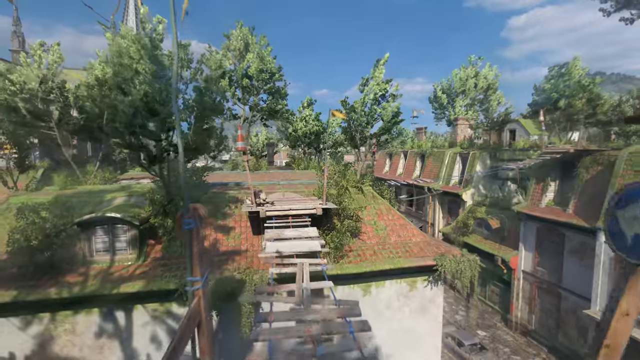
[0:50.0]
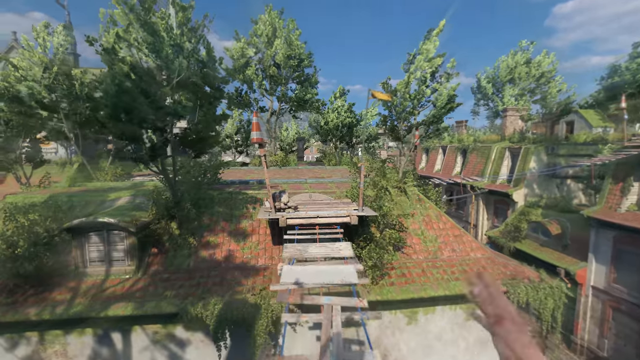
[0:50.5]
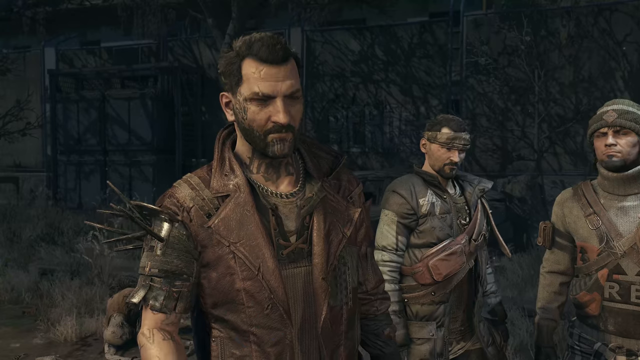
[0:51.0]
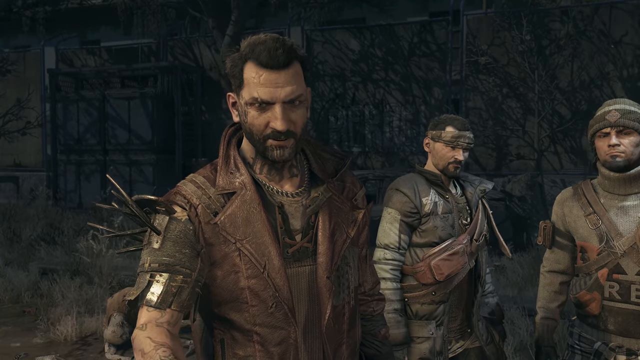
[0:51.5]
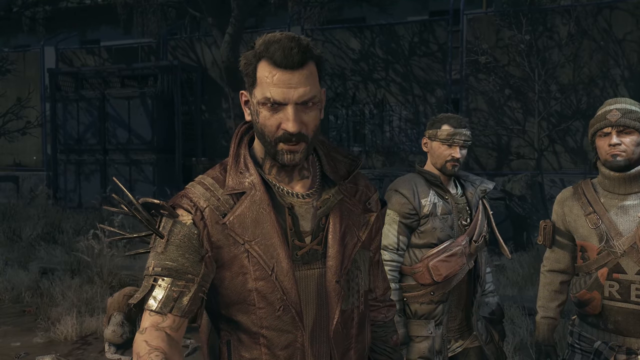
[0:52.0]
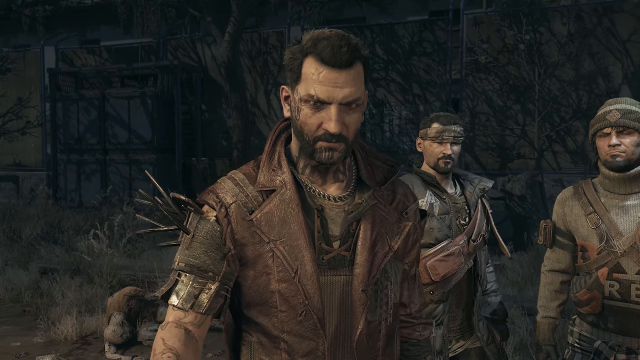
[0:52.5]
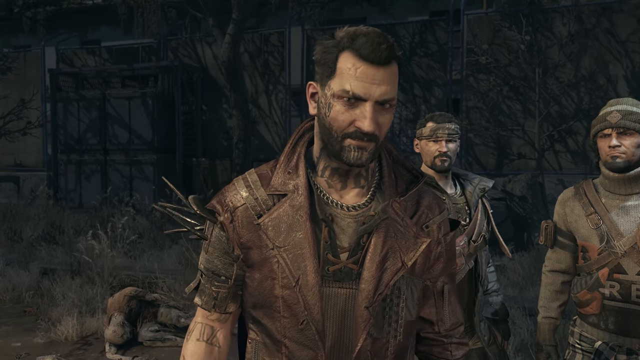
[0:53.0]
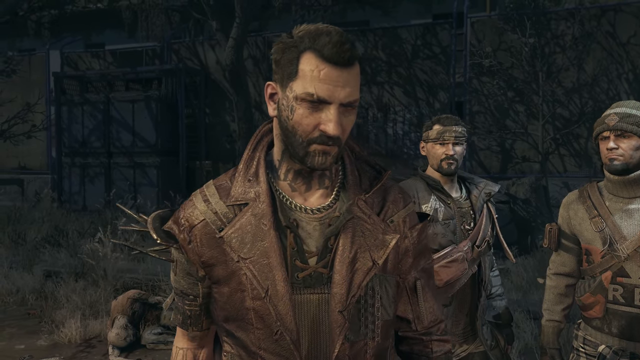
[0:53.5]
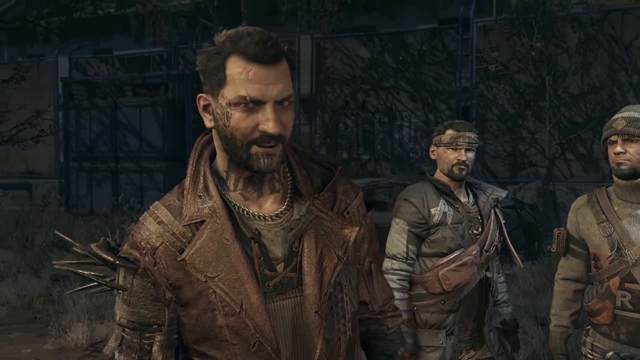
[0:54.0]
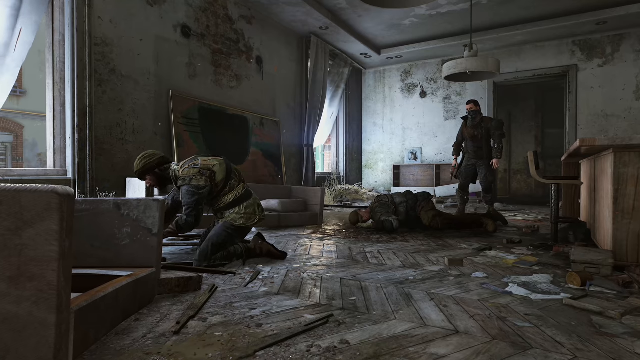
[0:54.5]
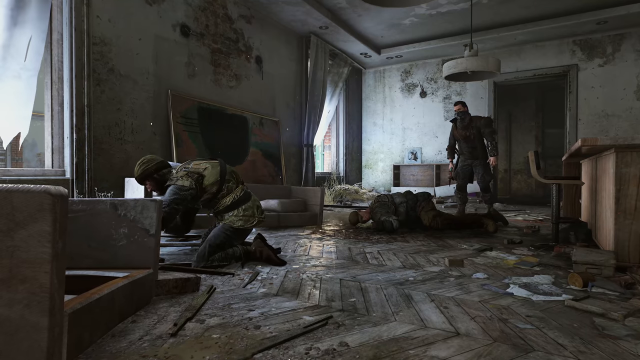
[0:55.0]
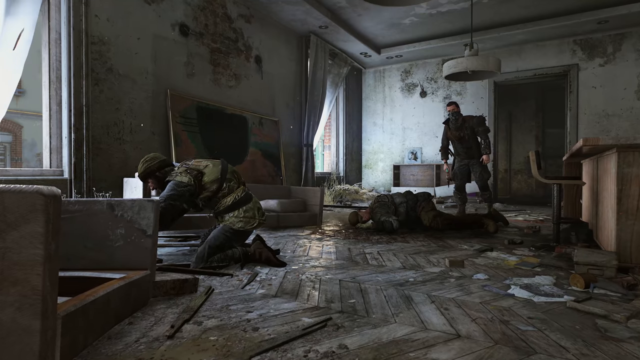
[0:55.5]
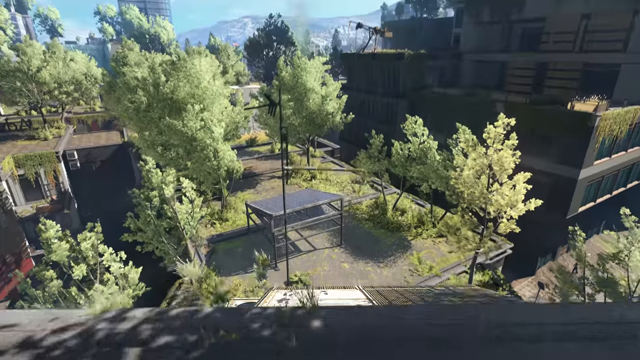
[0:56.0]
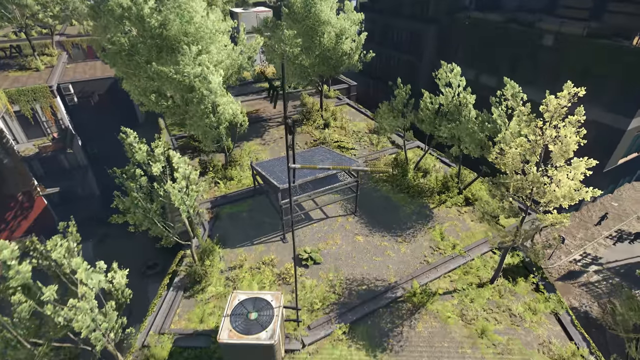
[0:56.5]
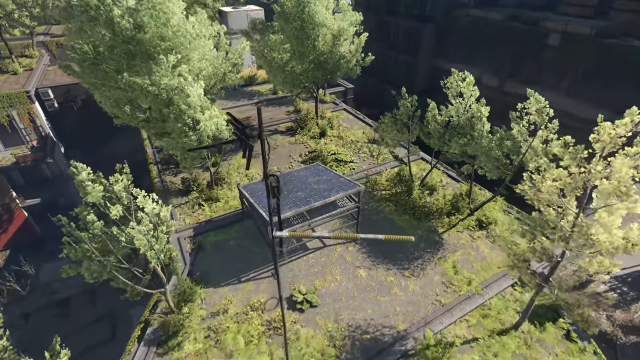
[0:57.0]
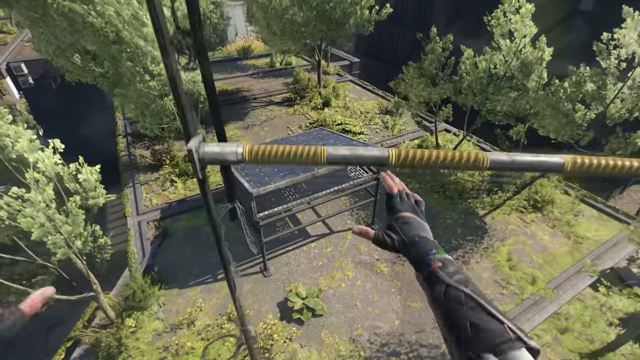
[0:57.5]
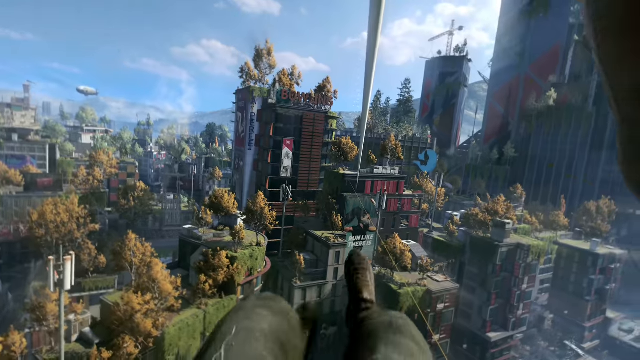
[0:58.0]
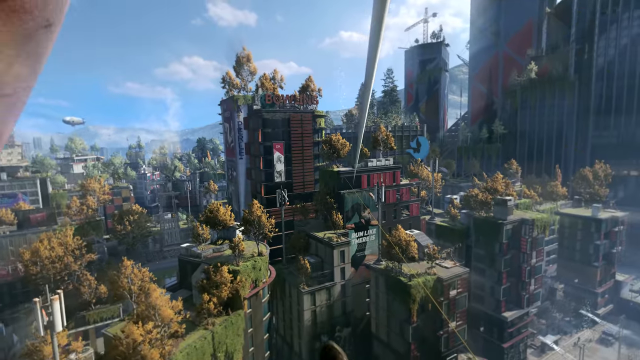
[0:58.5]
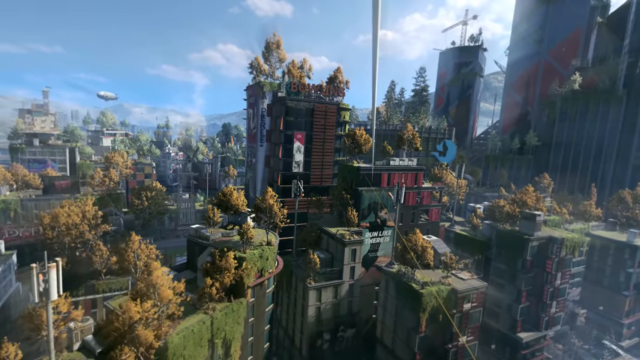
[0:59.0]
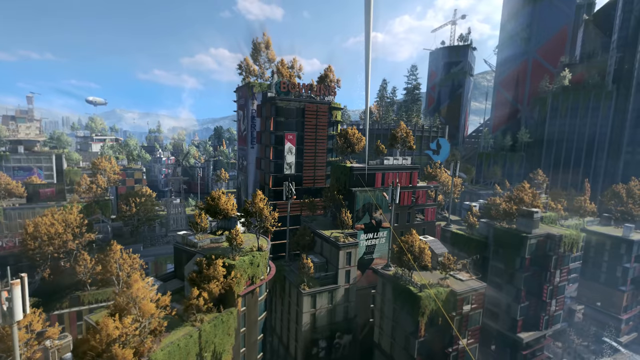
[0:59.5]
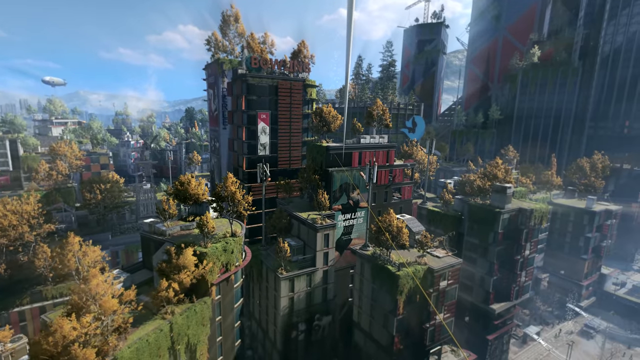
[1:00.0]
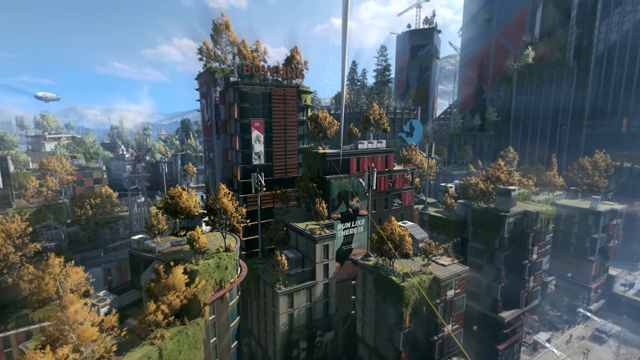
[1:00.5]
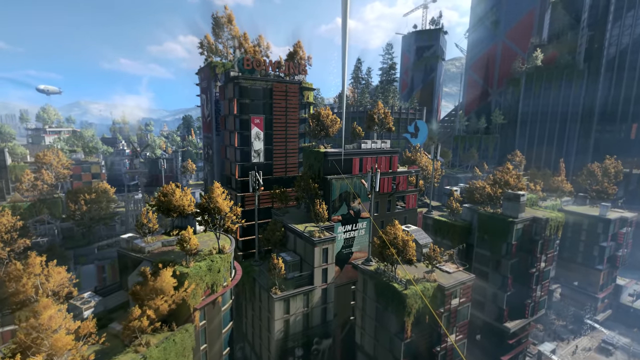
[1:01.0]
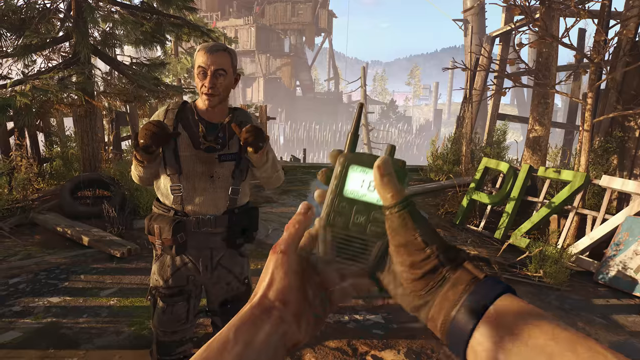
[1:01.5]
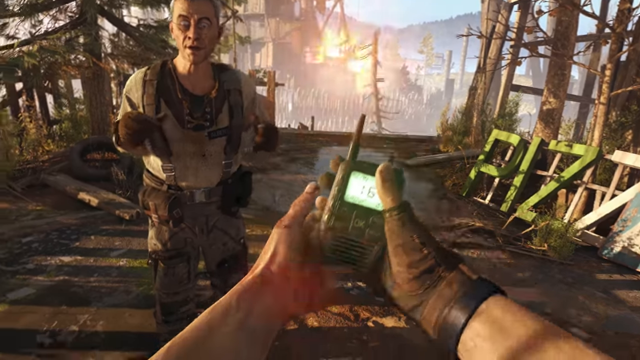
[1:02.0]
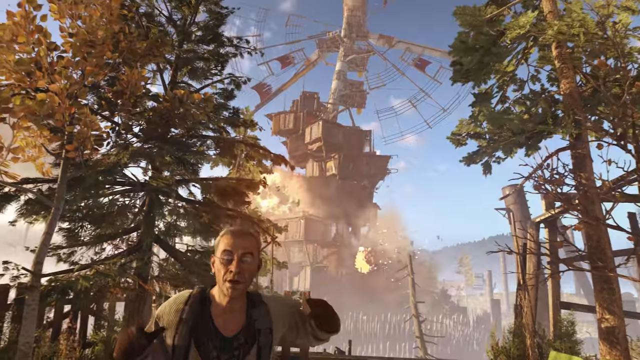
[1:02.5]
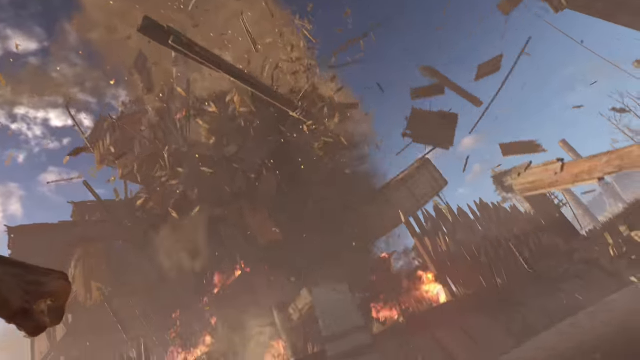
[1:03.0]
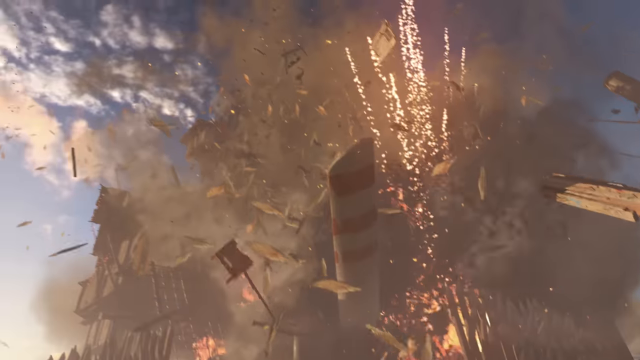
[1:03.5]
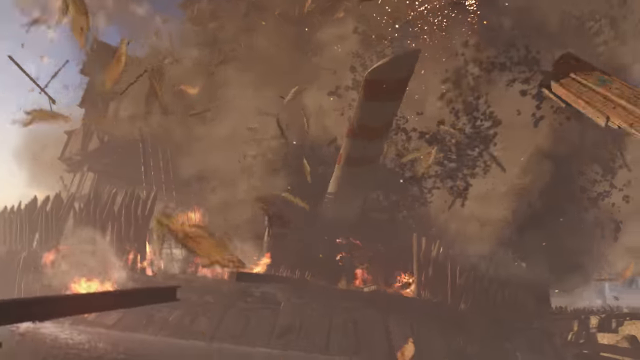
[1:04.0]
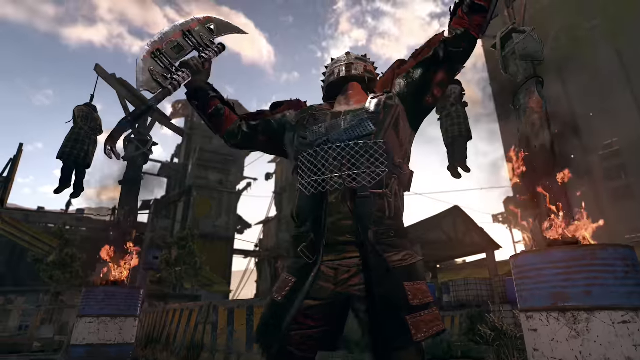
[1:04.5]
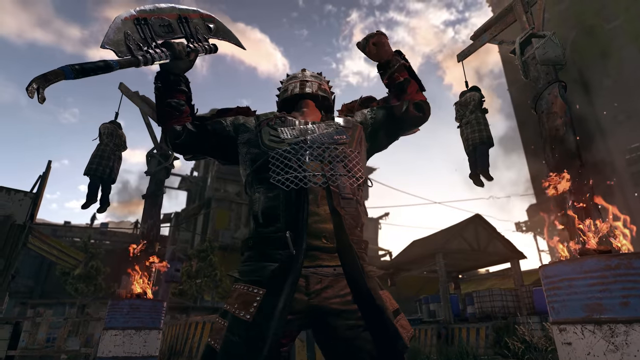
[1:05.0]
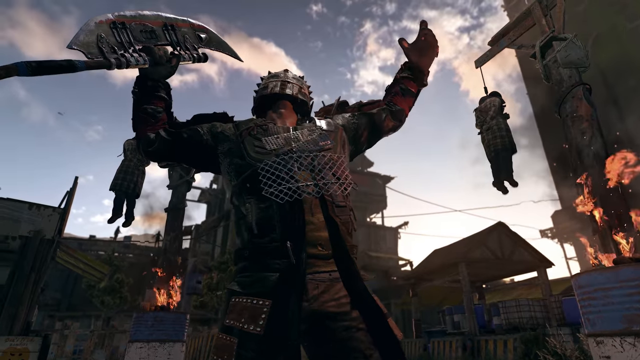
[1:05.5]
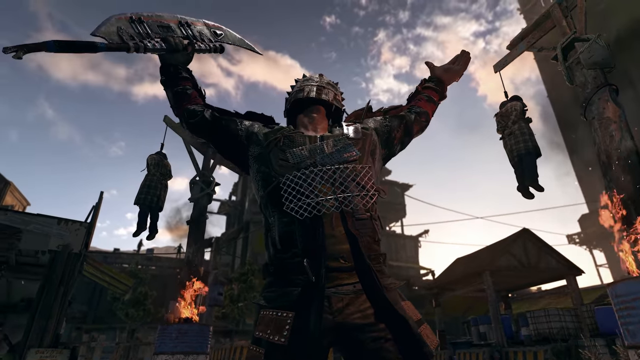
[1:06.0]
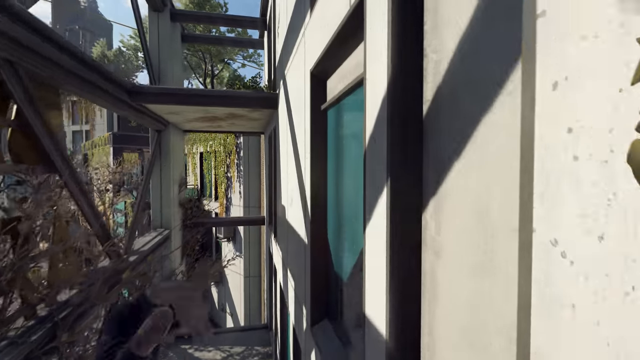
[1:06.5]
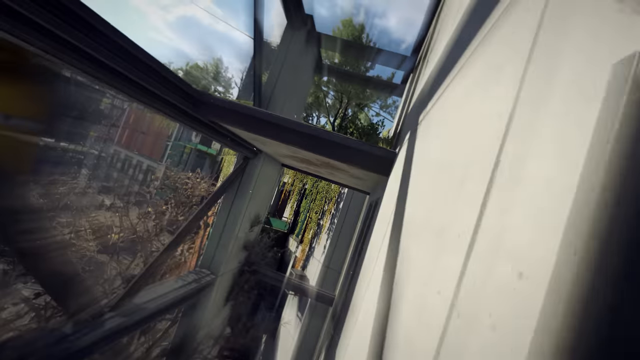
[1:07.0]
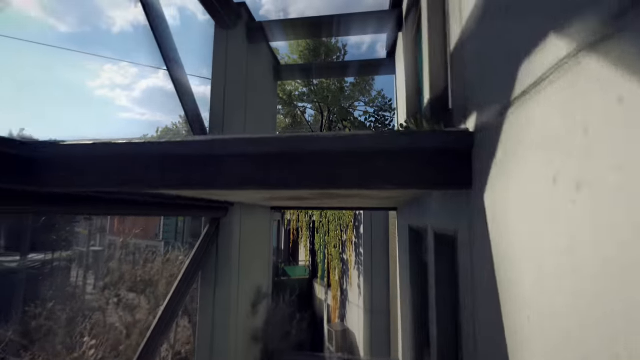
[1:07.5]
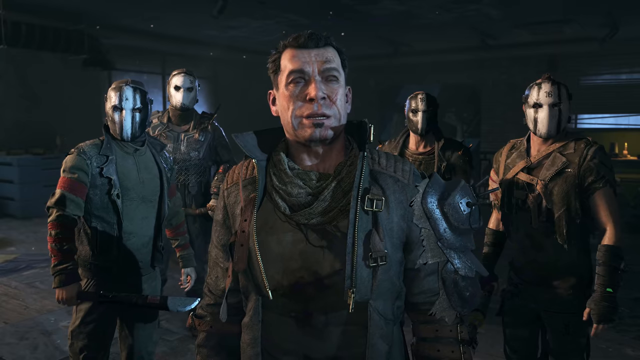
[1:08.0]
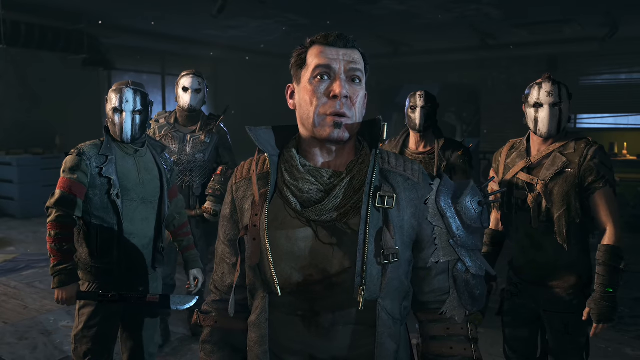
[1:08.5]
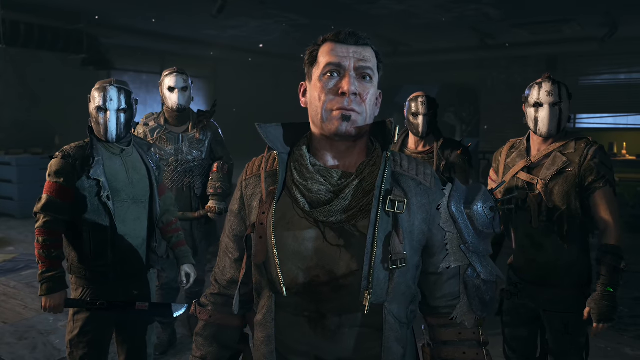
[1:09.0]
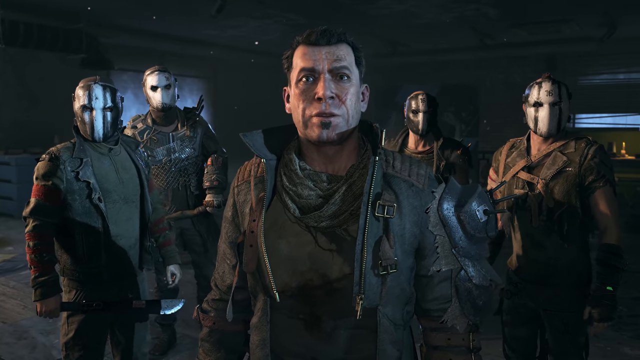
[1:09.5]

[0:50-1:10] The view is on top of houses, then jumps down. Three people who are not zombies look like they are trying to survive. More people are in an abandoned building. Someone outside swings from wires and cords, apparently from building to building. A person in protective gear holds a thick, sword-like metal weapon in one hand and pounds his chest with the other hand; his face is covered by what looks like a metal mask. A group of five people appears, one not wearing a mask and the others all wearing white masks that look like Jason masks and look creepy; they are not zombies.